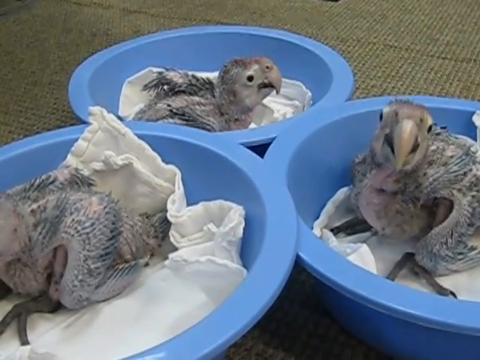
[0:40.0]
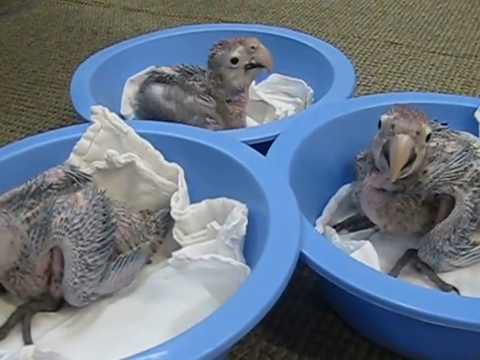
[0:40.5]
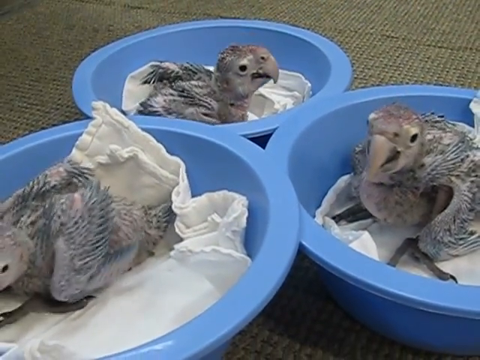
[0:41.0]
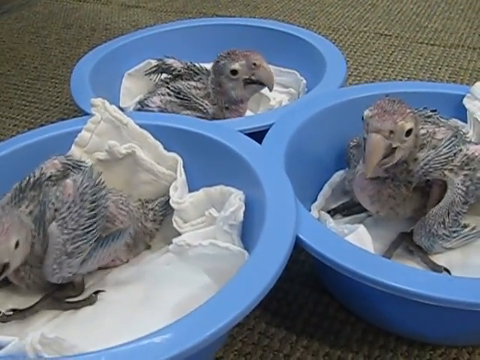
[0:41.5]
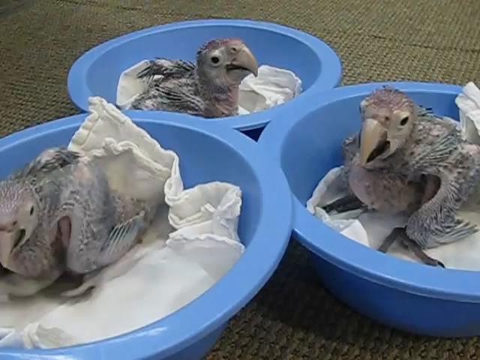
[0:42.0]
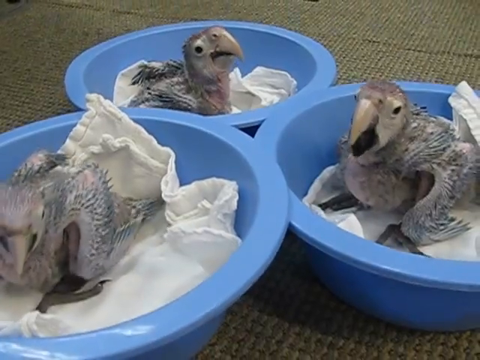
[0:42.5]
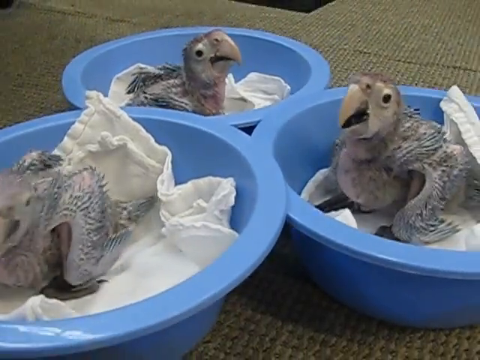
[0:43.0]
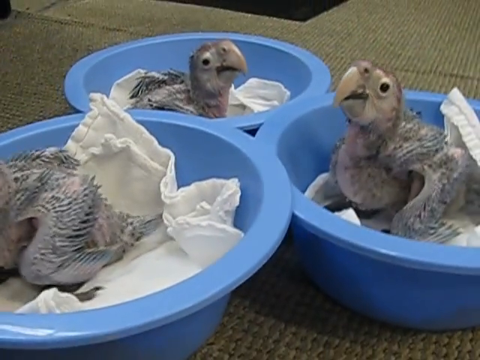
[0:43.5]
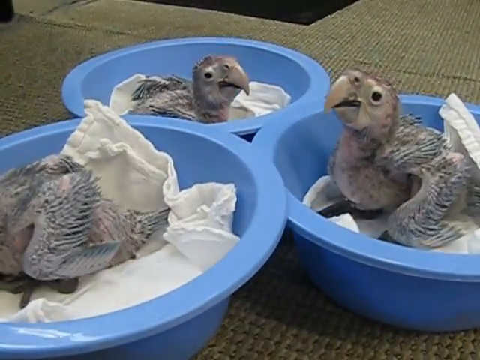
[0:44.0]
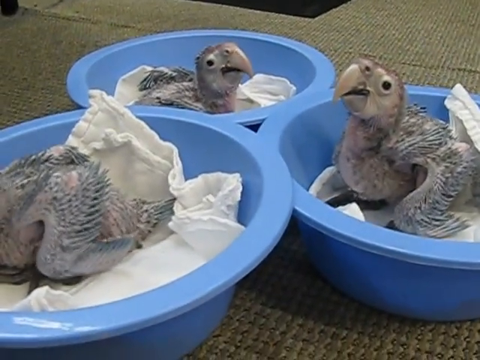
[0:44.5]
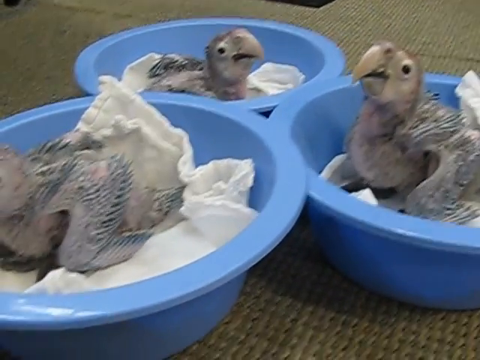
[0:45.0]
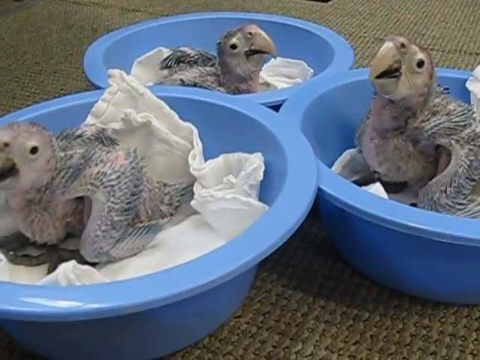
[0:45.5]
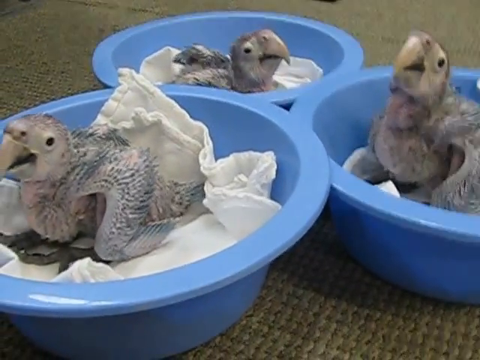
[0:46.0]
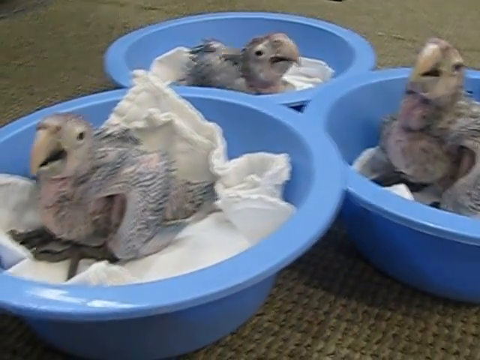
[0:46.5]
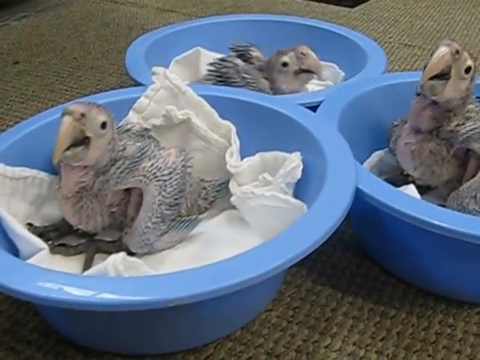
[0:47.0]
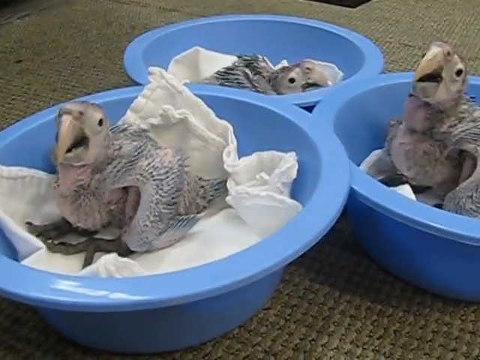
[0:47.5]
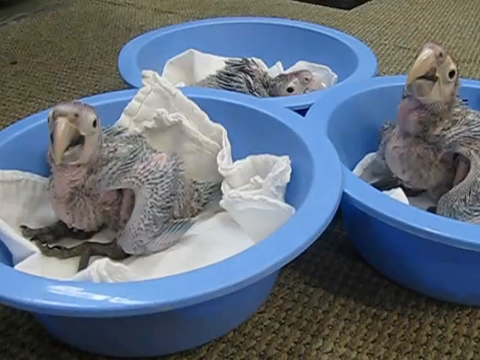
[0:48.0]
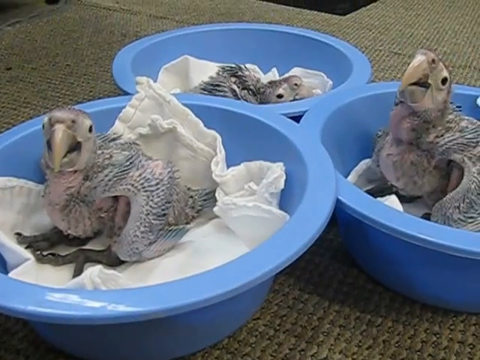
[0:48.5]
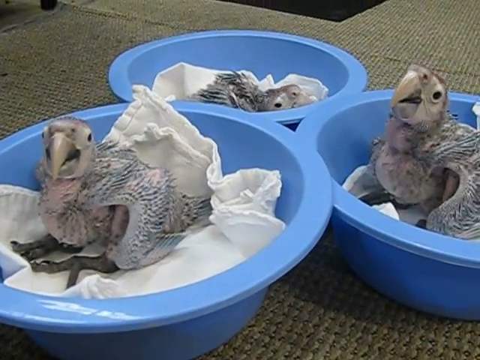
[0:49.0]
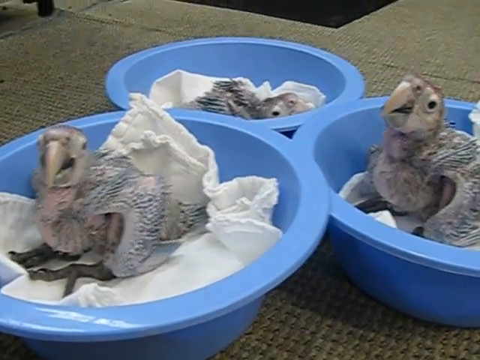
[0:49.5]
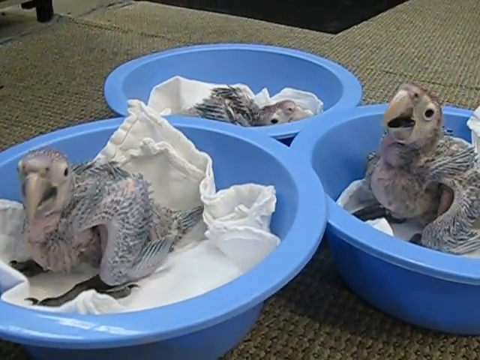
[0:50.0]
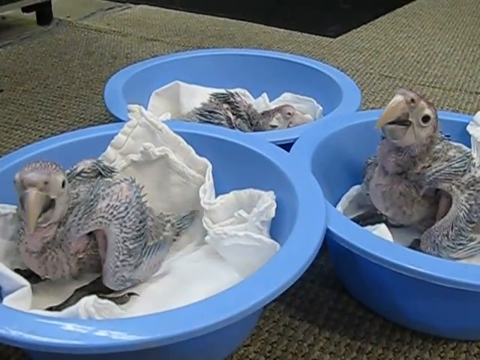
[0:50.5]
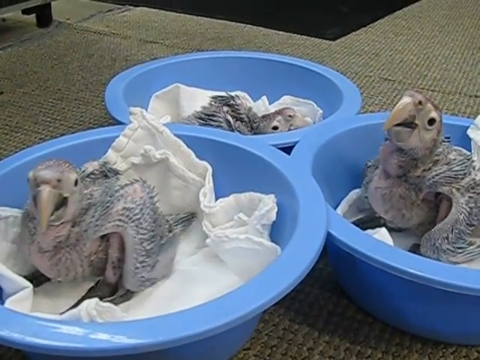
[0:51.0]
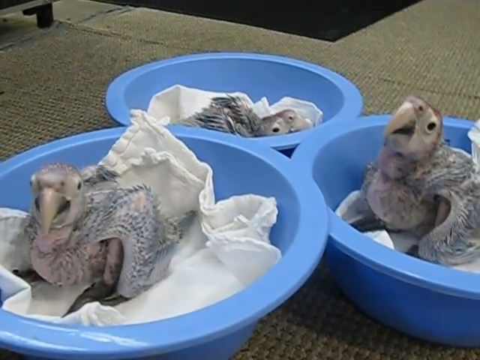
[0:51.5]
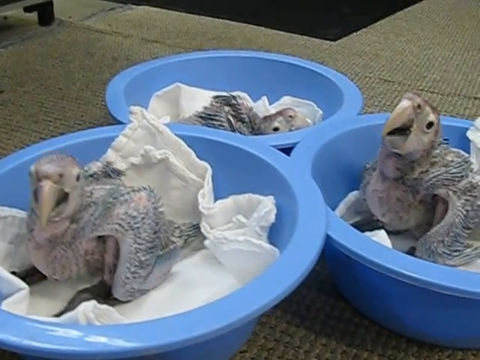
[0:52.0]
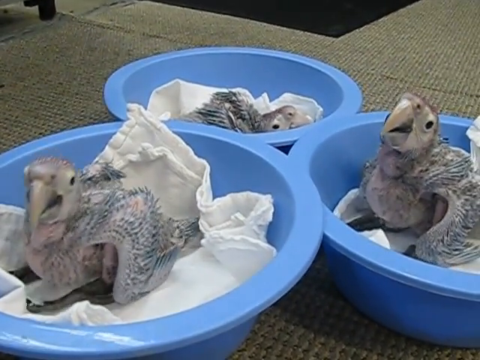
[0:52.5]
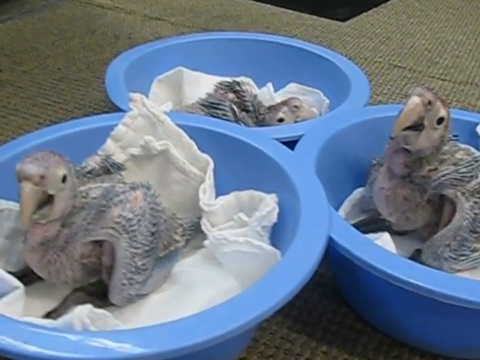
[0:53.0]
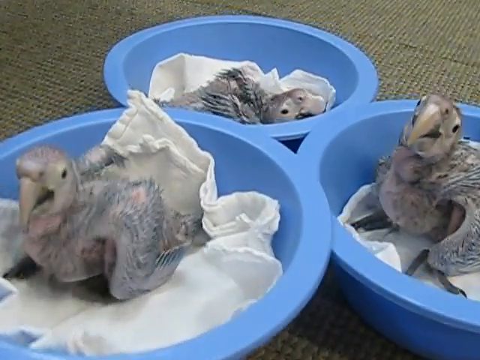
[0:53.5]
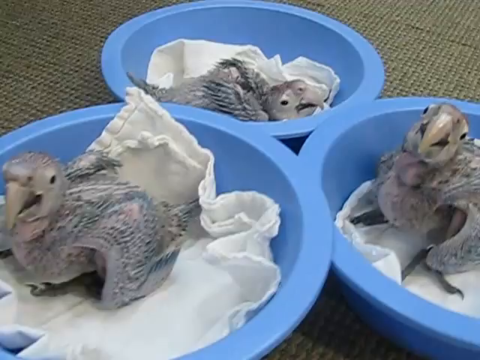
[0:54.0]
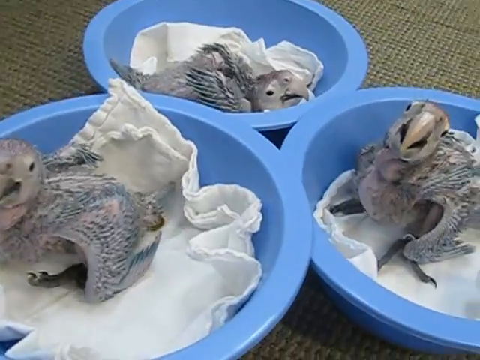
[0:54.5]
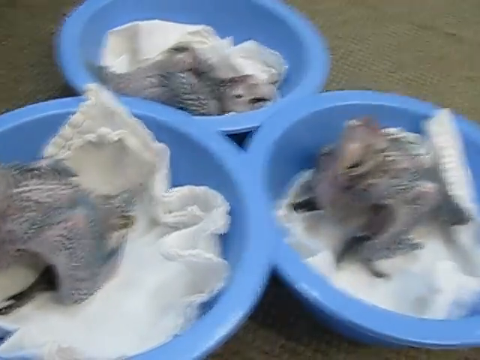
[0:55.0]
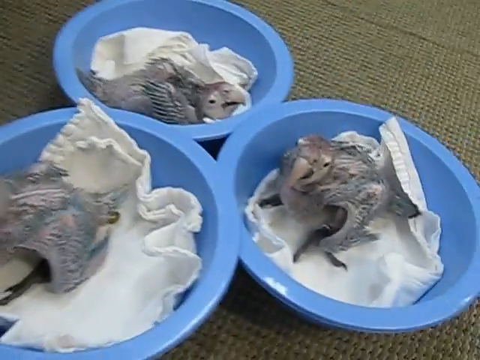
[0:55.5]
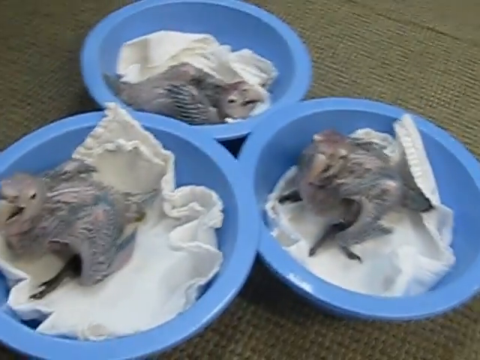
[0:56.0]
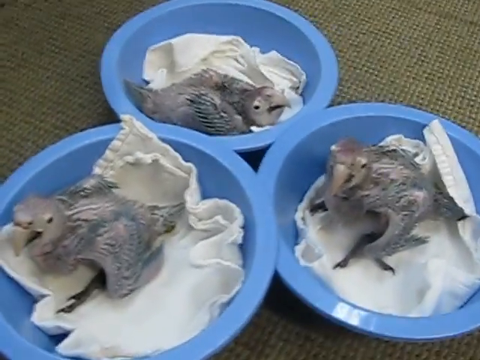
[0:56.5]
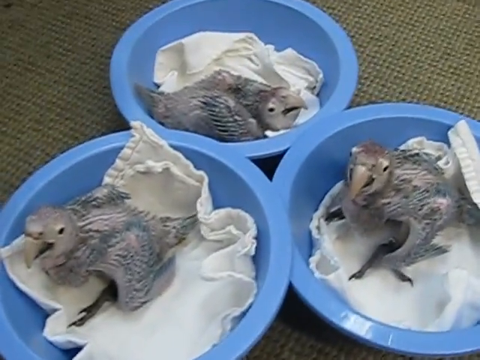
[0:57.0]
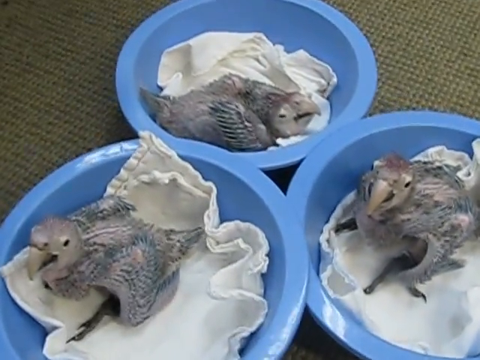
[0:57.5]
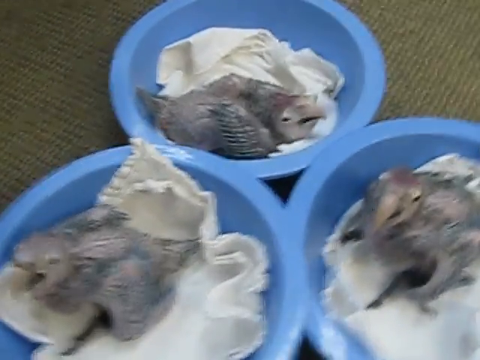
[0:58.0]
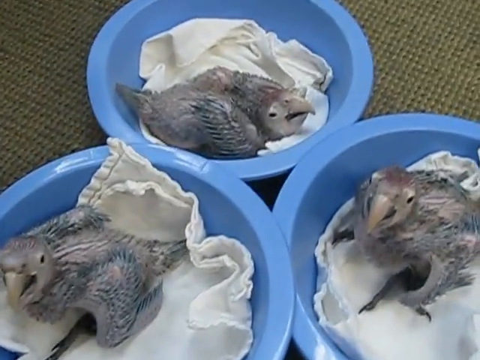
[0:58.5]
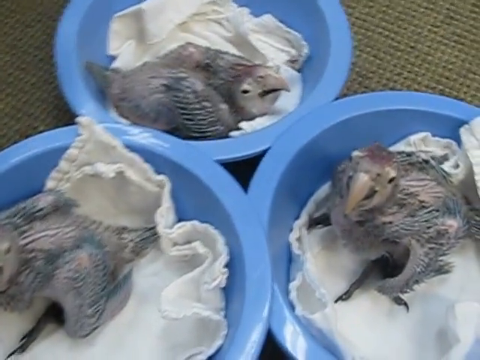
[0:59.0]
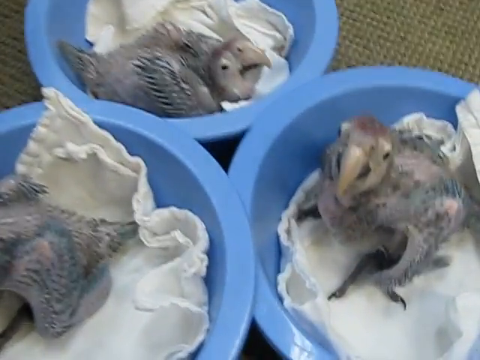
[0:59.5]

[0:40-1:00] The camera moves and shakes a bit, showing the brown rug on which three blue buckets sit, each with a white blanket, and one bird inside each. All three birds look pretty much the same. As they look at the person filming, their pink skin is visible, with some white and black feathers, a mostly white beak with some black in it, and really big, dark black legs. The first bird on the left moves around as it makes itself more comfortable on the blue bucket. The person lifts the camera and takes what could be called an aerial view shot of the three birds, all three of which are concentrated on looking at the person.